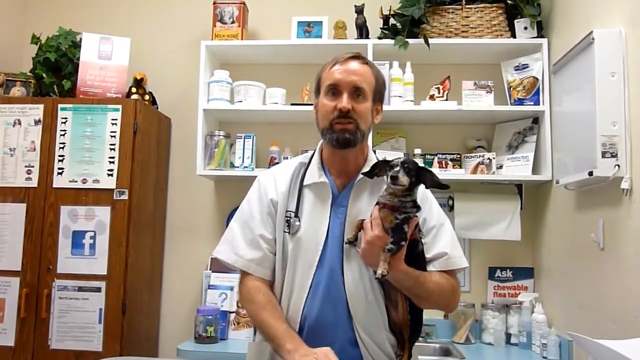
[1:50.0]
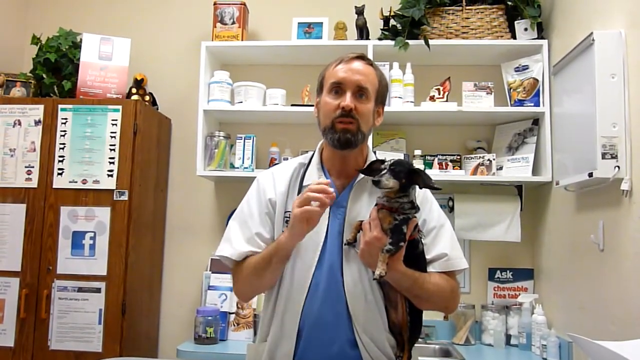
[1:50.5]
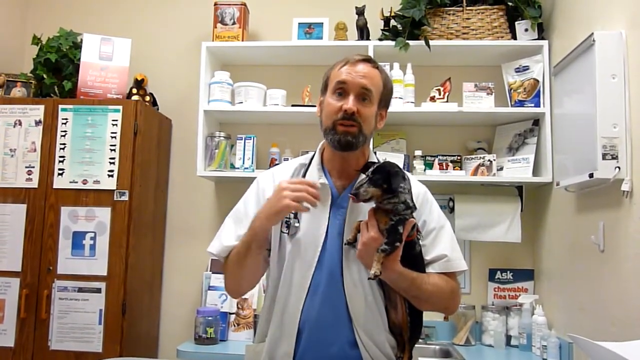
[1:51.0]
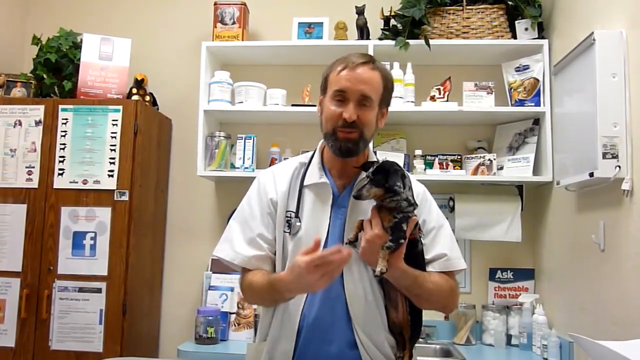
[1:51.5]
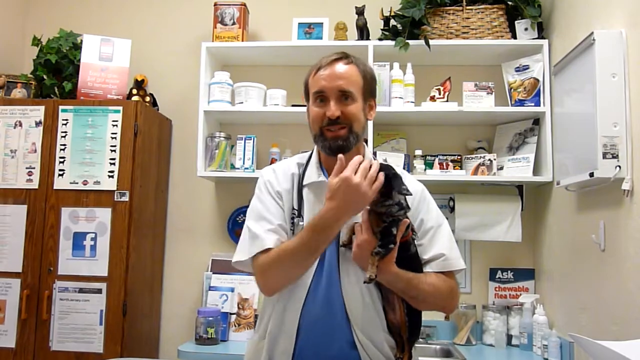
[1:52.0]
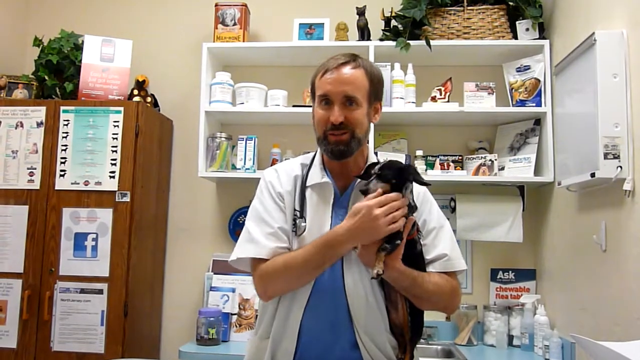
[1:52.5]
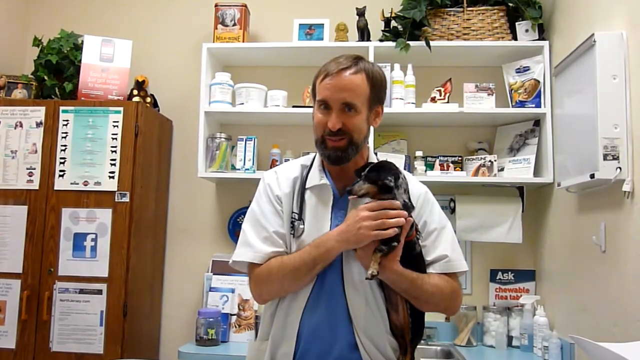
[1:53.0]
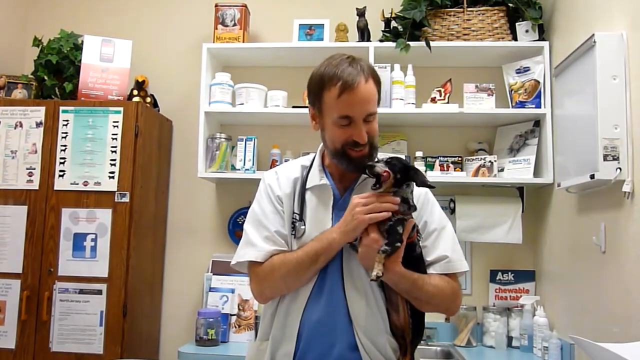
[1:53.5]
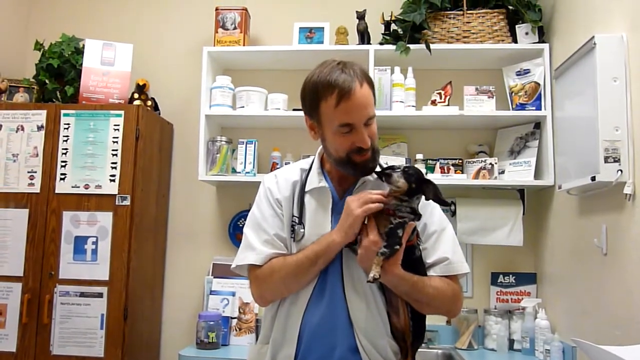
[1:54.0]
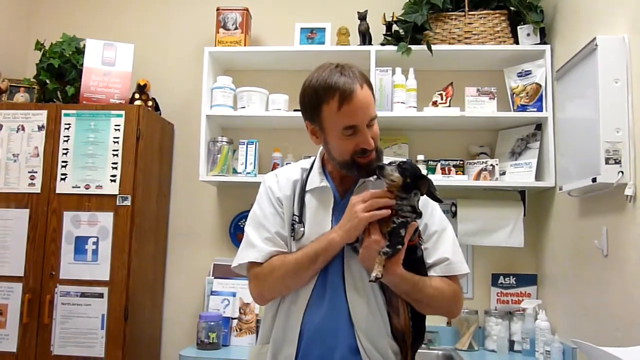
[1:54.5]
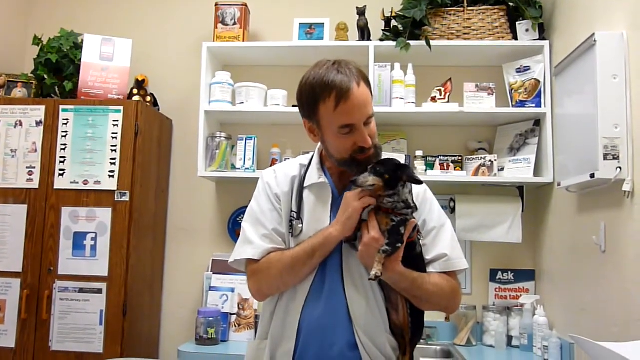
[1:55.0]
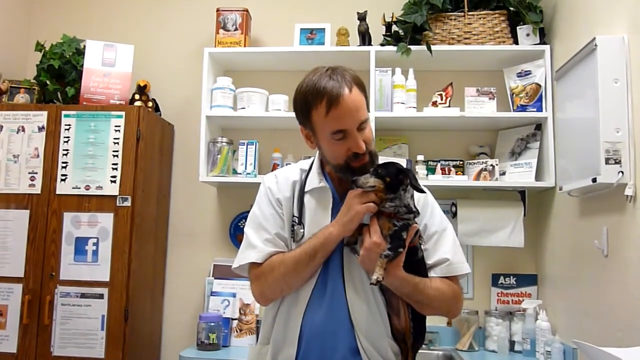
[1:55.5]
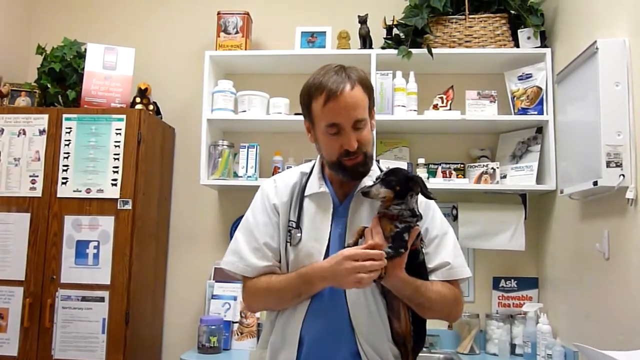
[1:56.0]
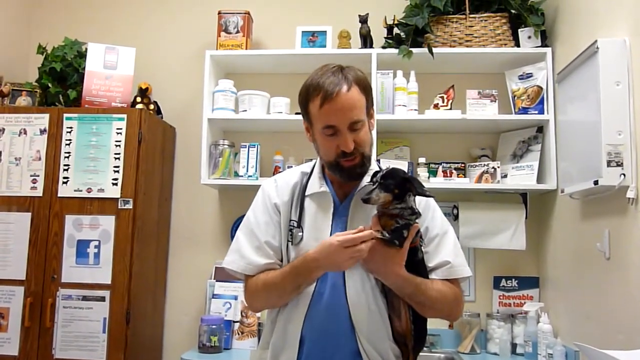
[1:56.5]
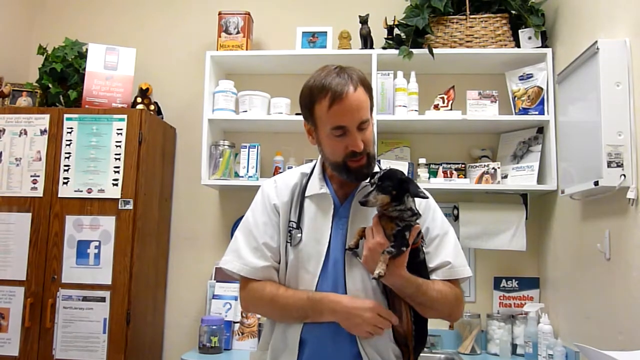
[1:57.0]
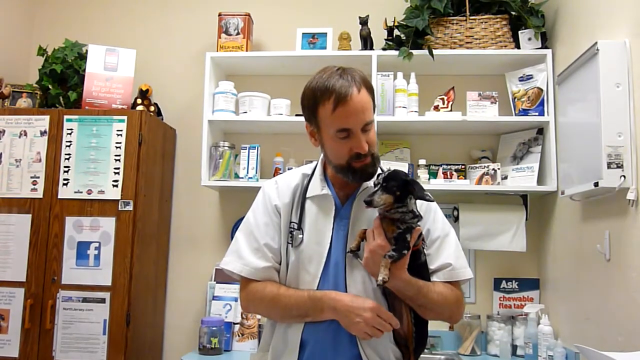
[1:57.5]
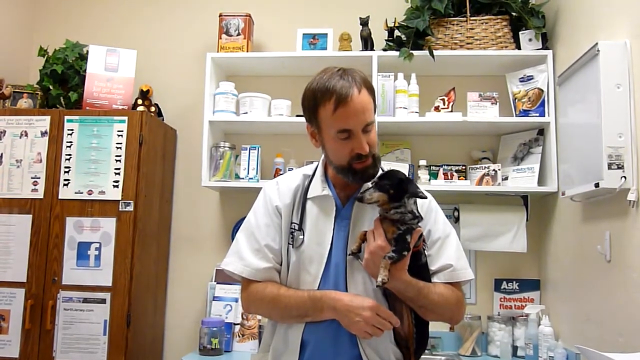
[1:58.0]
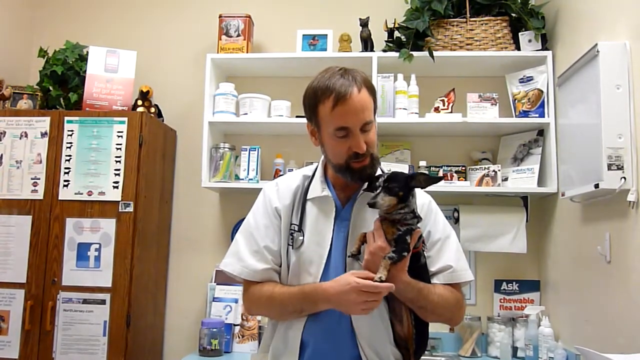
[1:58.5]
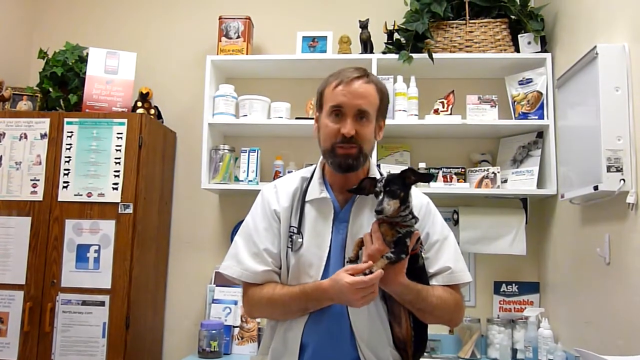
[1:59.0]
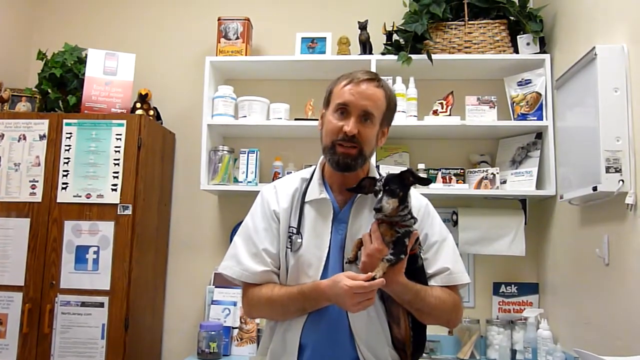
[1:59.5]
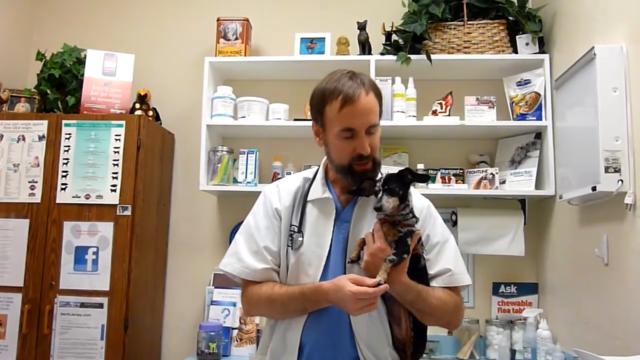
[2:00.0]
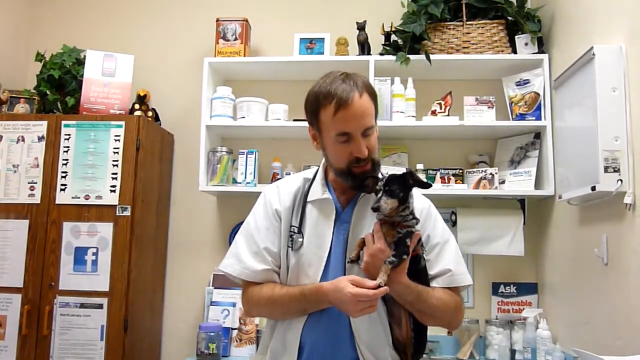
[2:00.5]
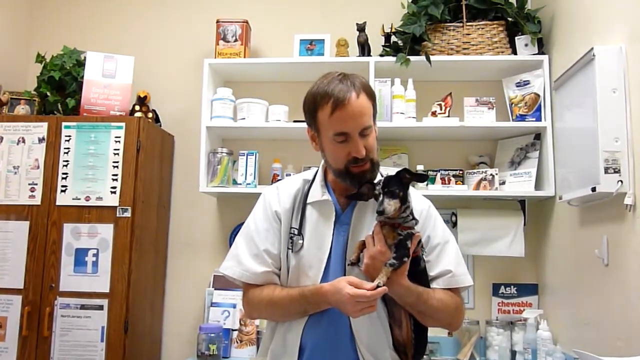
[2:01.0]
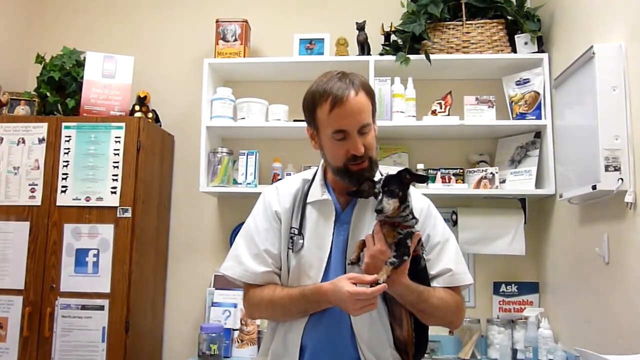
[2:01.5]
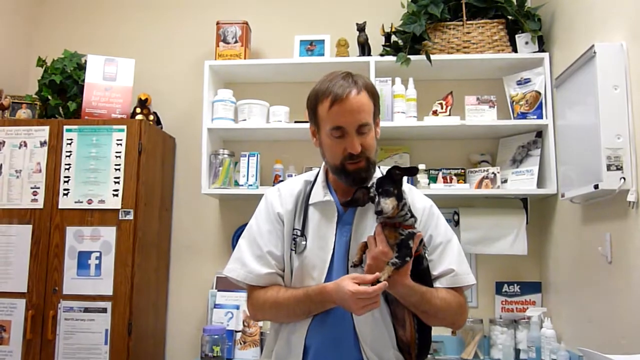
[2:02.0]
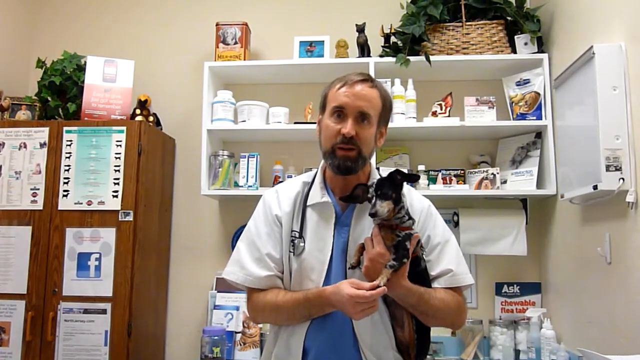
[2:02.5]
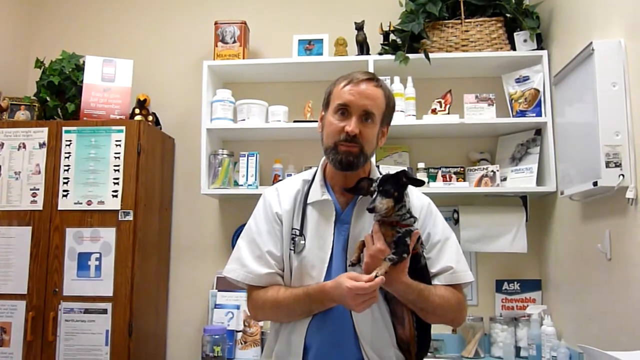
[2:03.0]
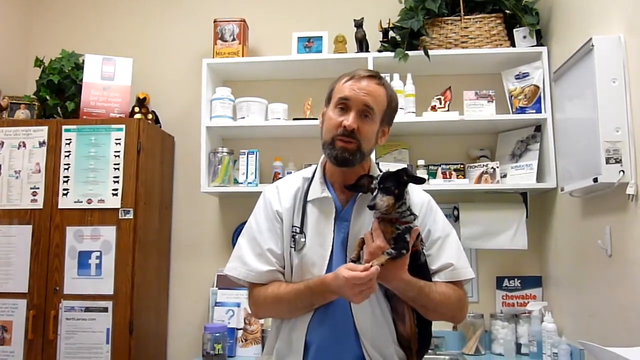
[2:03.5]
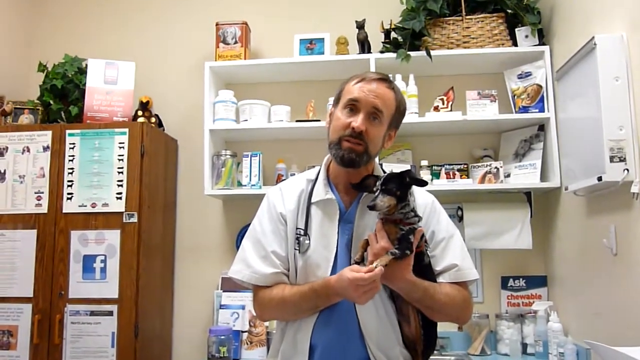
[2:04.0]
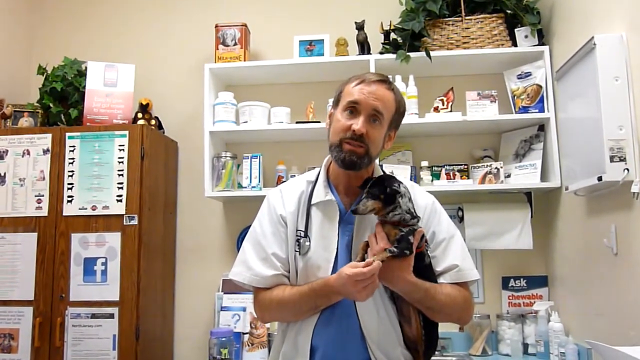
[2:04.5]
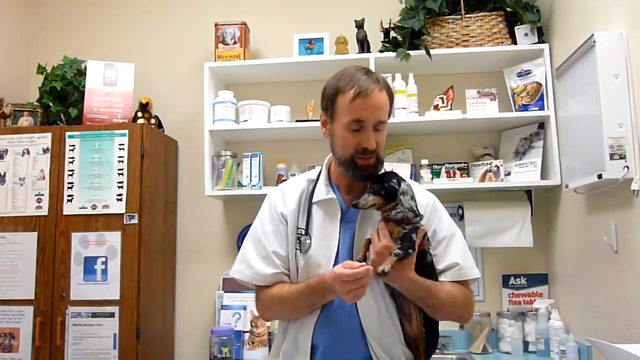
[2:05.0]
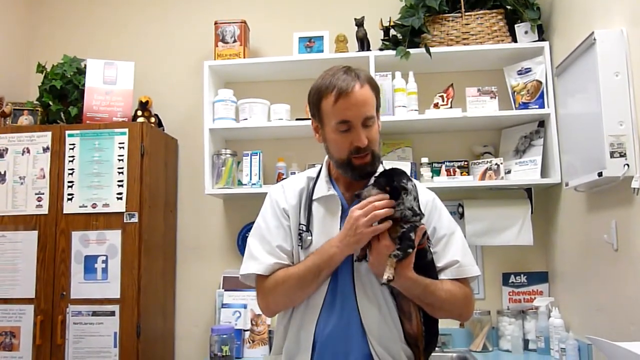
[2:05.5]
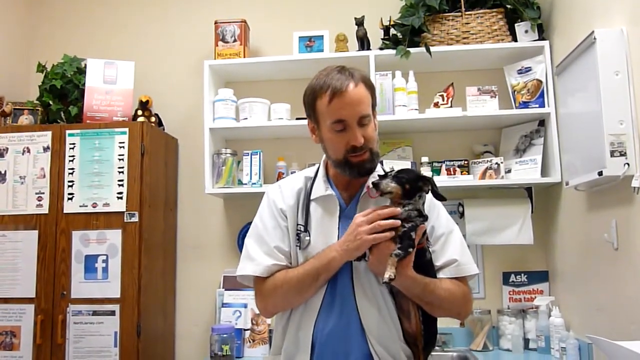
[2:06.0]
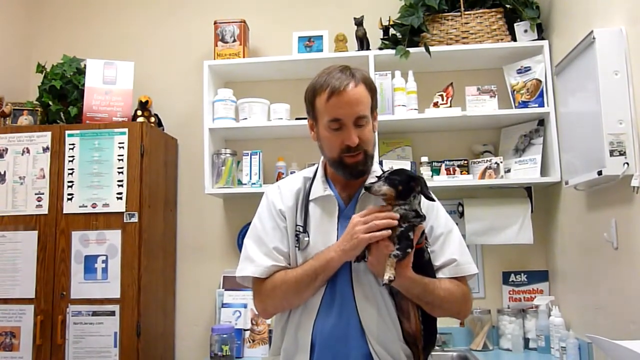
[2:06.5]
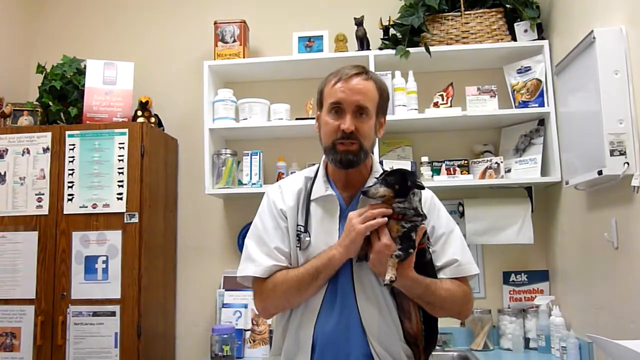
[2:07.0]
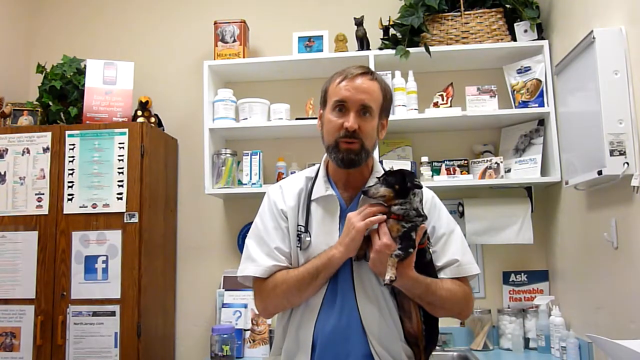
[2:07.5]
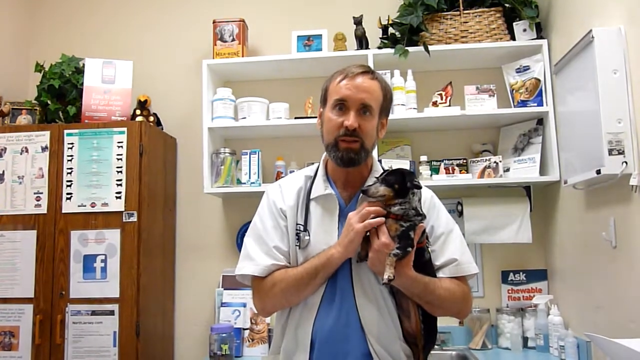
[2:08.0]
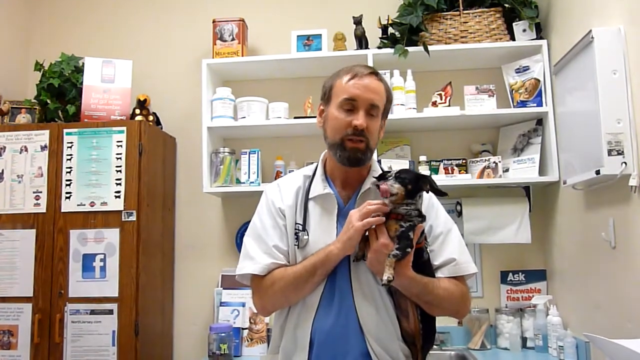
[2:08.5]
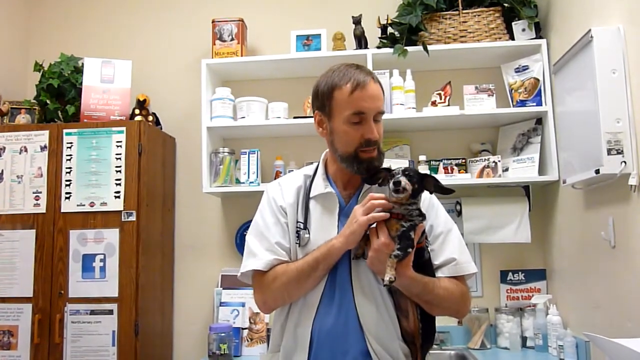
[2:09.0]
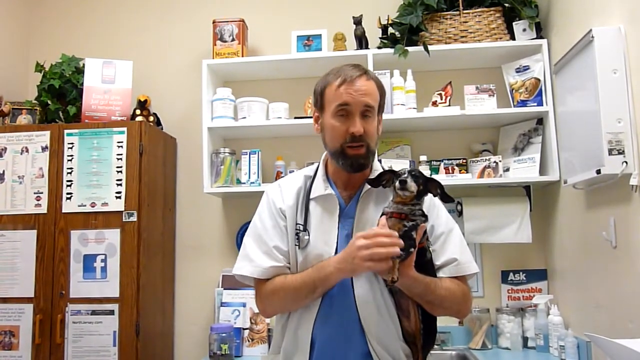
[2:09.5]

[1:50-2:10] The vet, apparently giving a summary of the tooth brushing, holds the dog with his left hand under the dog's front paws while gesturing with his right hand as he talks, every so often returning his right hand to the dog's neck to pet and caress him gently. He makes eye contact with the dog and appears to be enjoying himself. He gently shakes the dog's front paw. The dog's ears move up, and the dog licks his chops, sticking his tongue out and licking his own face from left to right. The process appears to be complete.